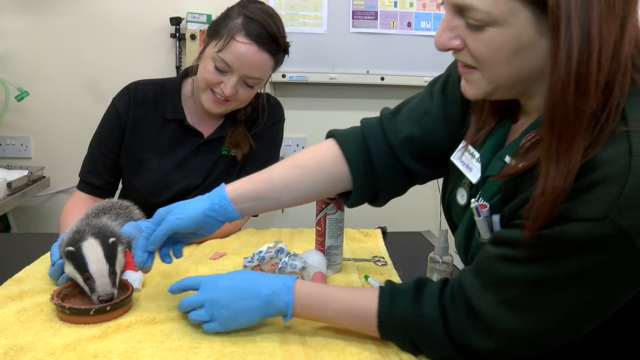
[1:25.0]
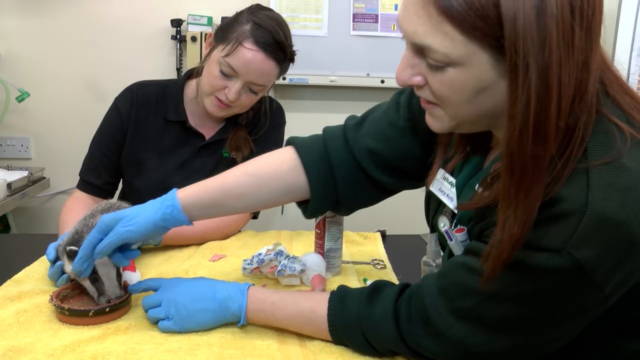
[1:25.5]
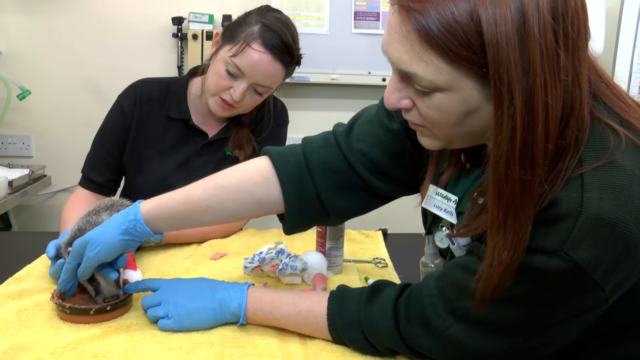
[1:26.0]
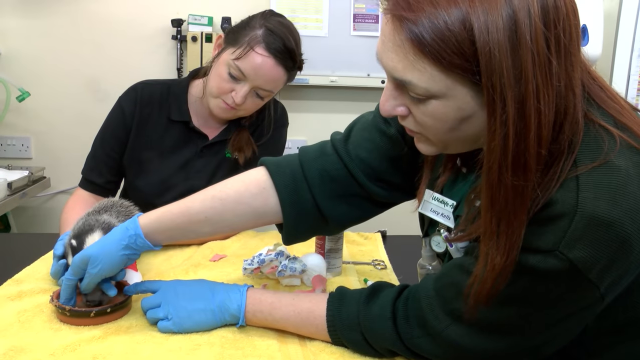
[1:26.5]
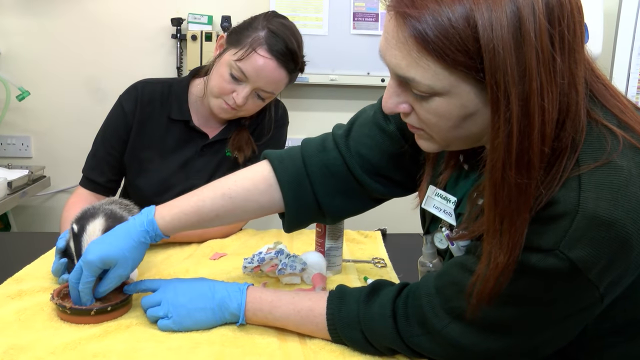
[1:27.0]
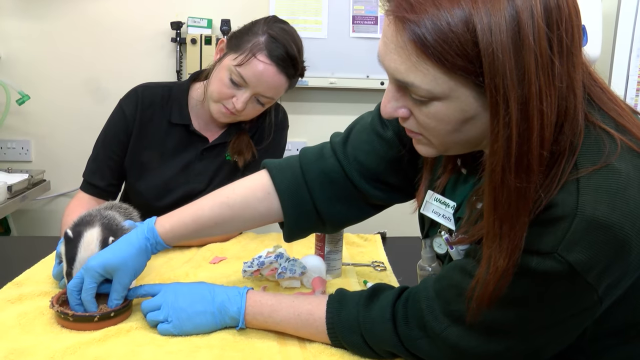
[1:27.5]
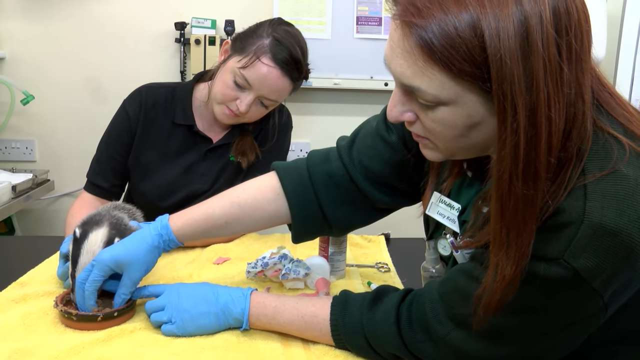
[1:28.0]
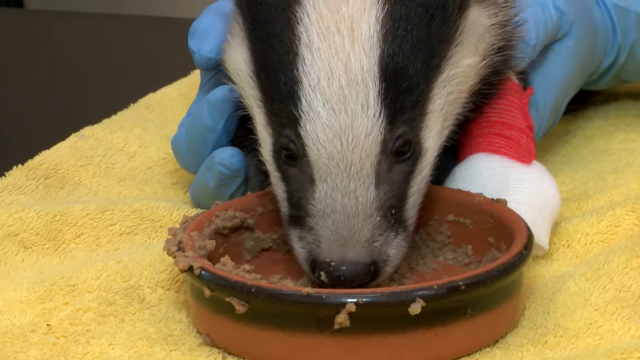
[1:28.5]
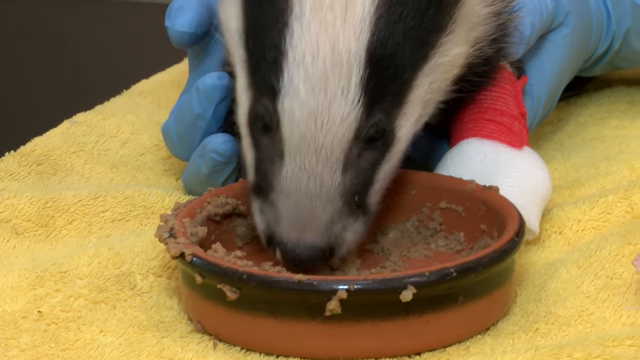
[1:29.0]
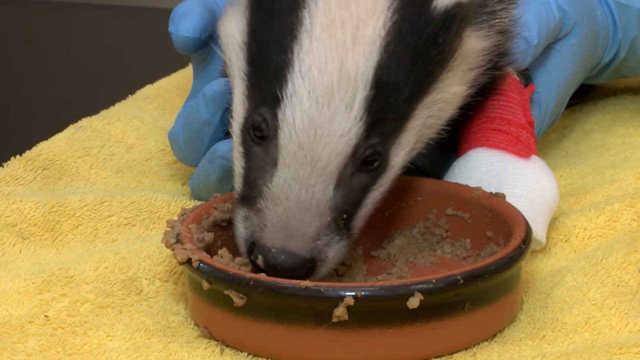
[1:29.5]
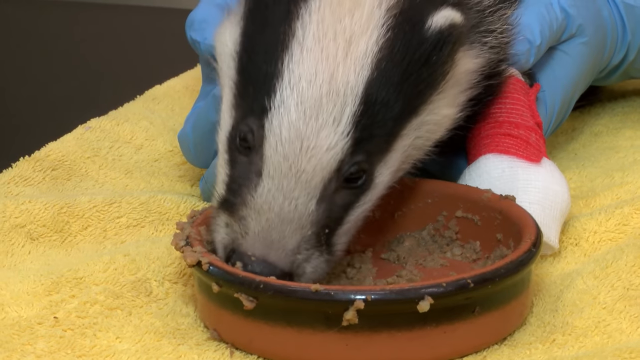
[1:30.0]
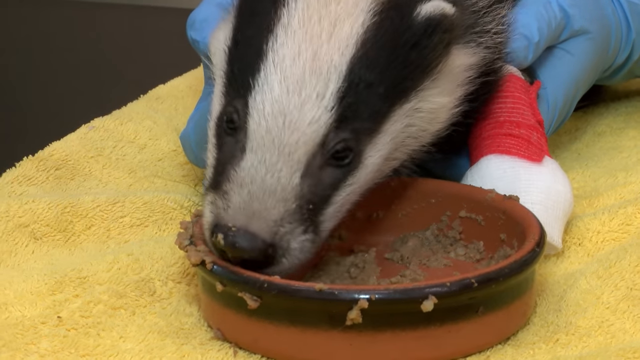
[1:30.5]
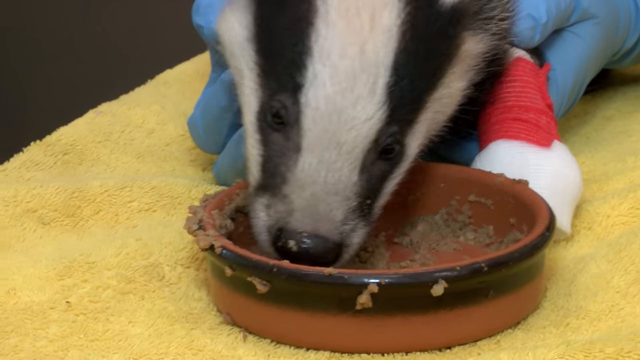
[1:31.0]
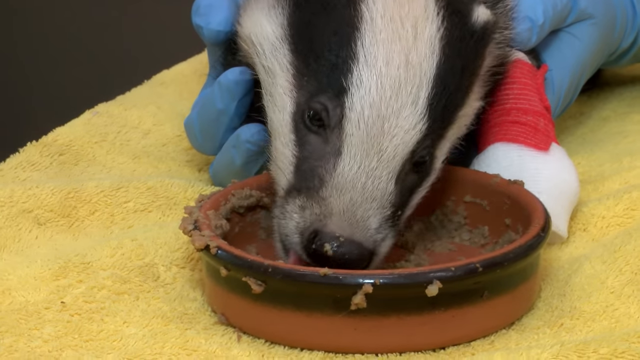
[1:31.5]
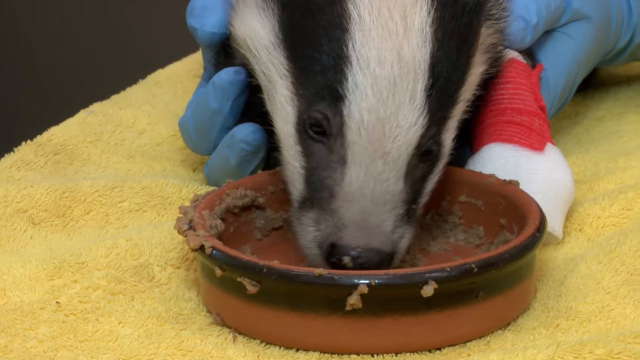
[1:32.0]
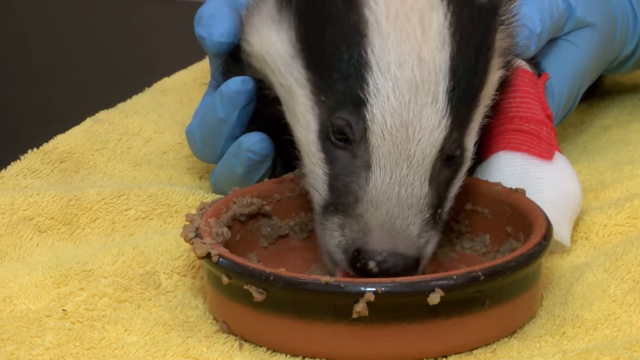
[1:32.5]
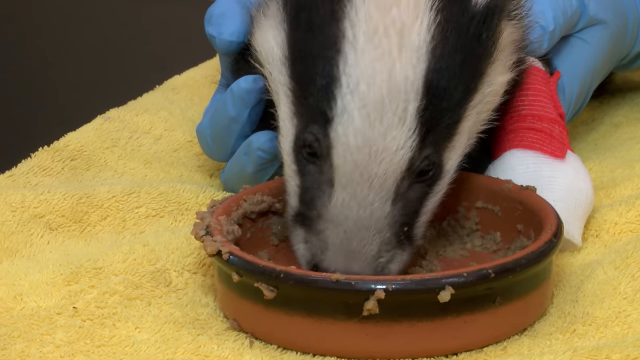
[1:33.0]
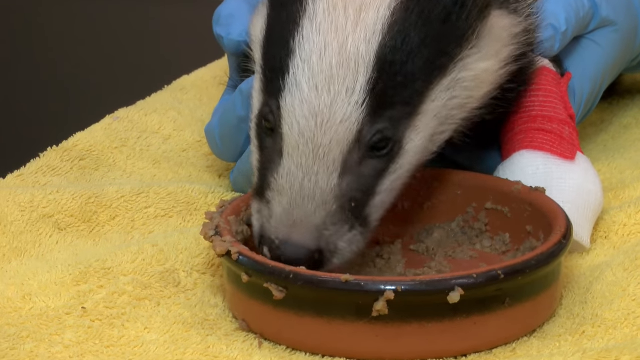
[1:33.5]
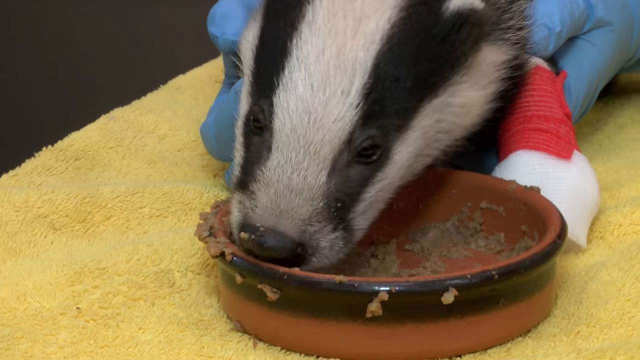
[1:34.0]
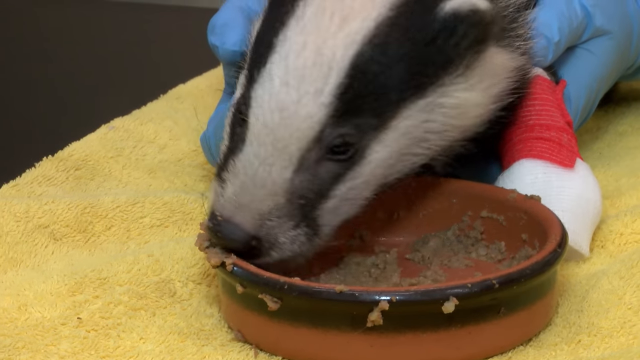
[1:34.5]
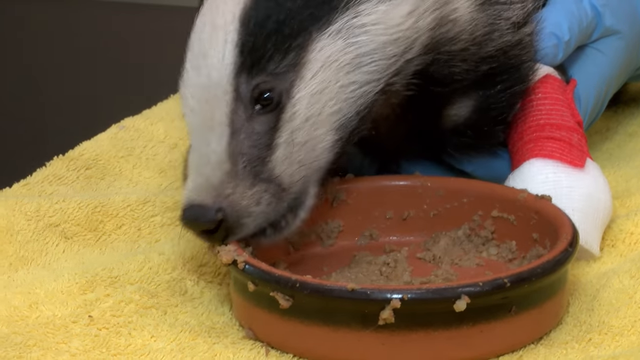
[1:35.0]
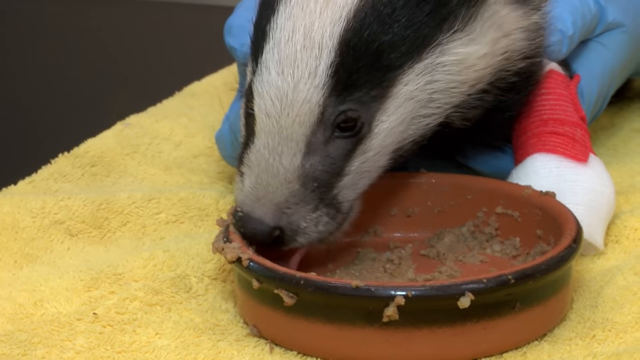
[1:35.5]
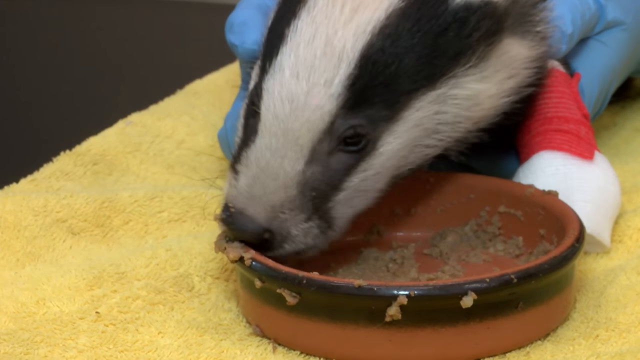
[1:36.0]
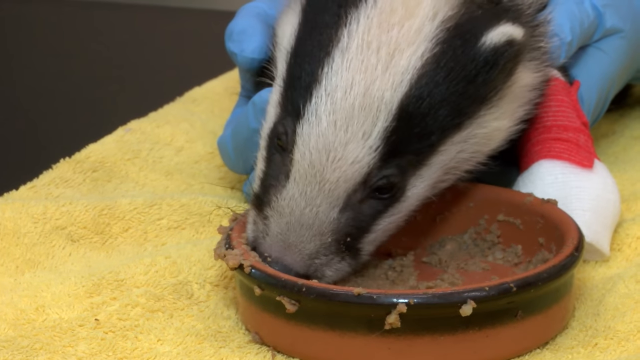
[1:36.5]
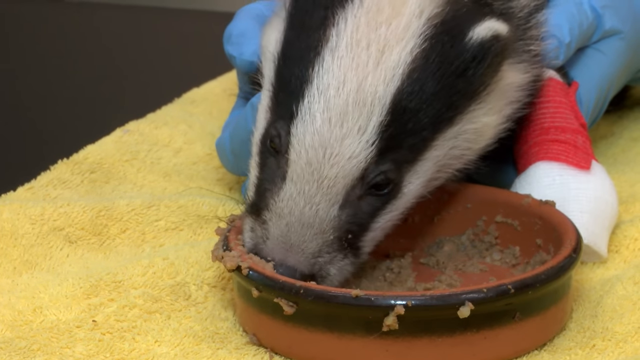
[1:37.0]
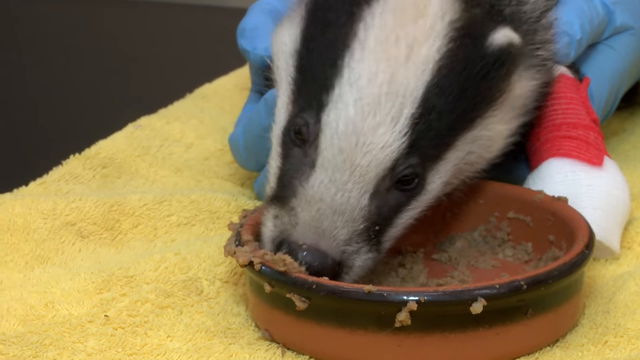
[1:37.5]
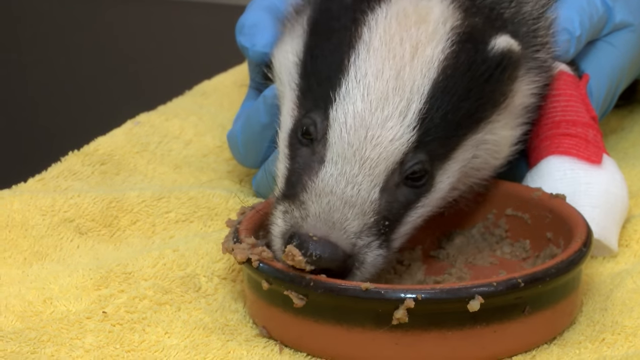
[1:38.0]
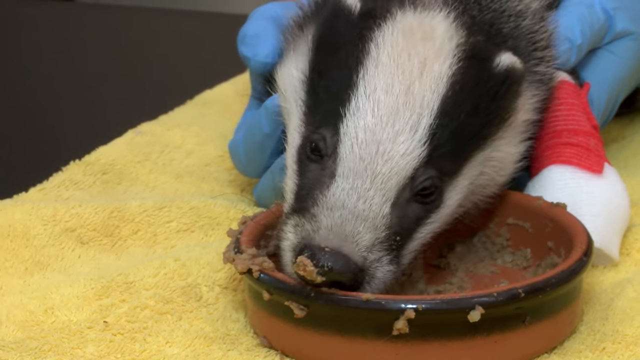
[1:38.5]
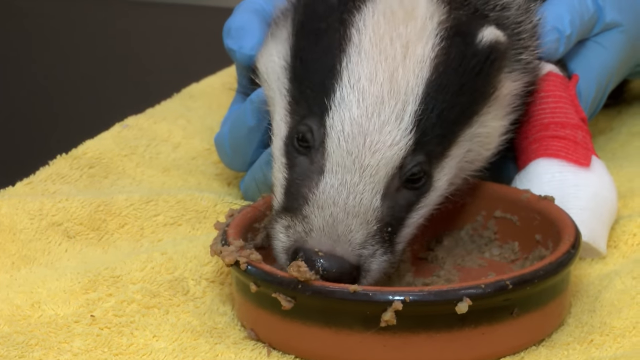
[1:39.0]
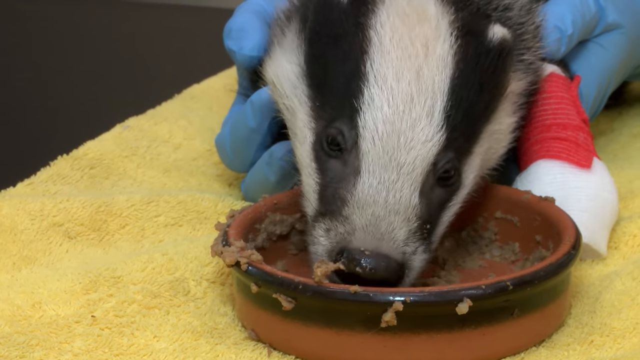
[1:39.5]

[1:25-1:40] After being weighed, the badger is on the yellow towel and seems to be eating out of a small round tray on the table. The two women are with him. He looks to be eating a wet type of meal, going in on it, and seems very hungry. A better view shows some of the equipment on the wall, including a board with papers on it.